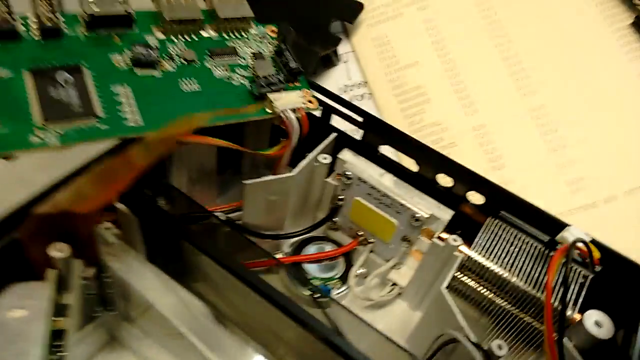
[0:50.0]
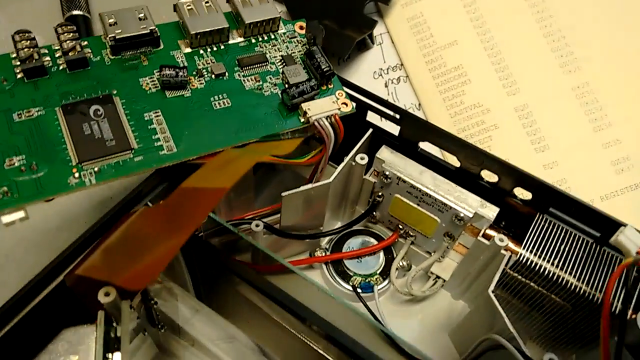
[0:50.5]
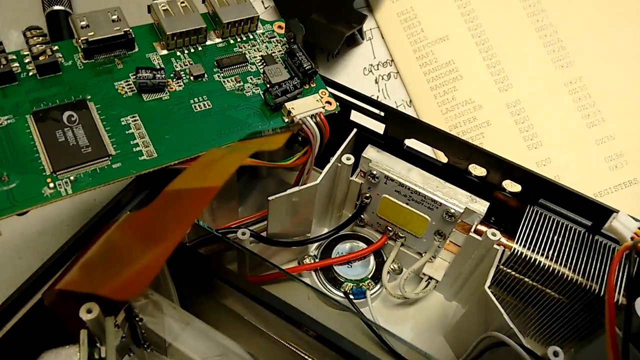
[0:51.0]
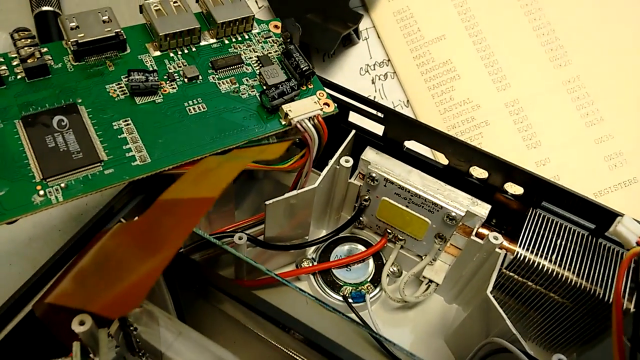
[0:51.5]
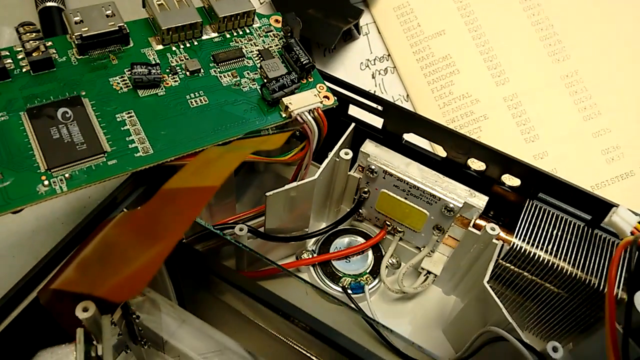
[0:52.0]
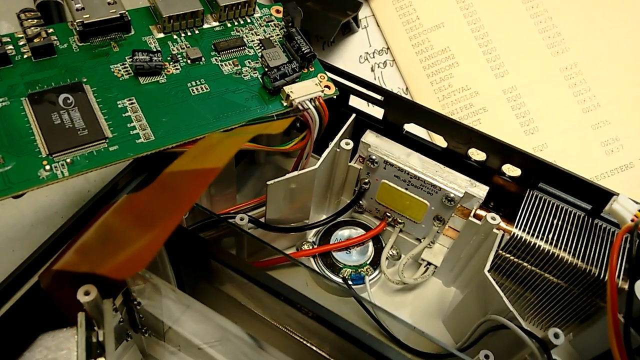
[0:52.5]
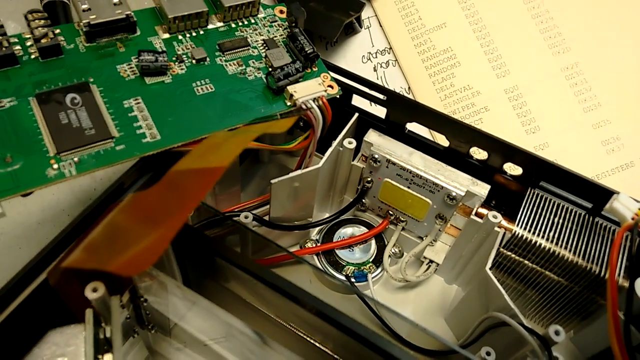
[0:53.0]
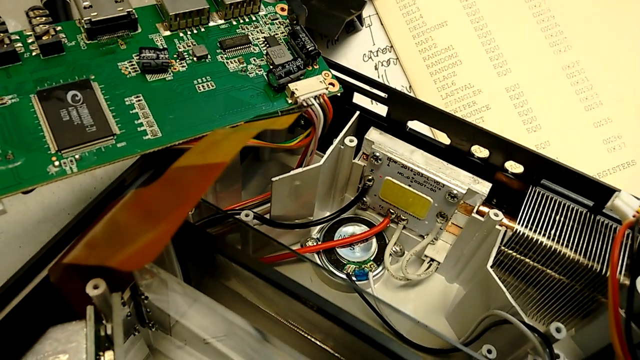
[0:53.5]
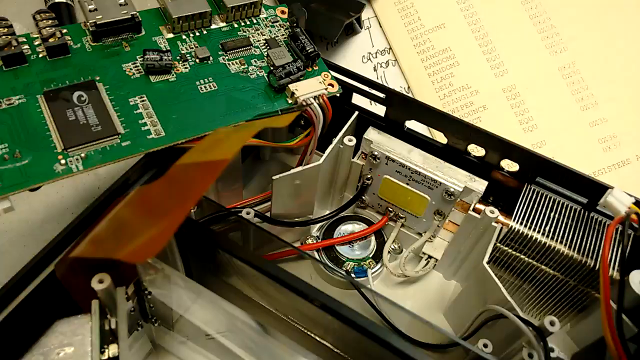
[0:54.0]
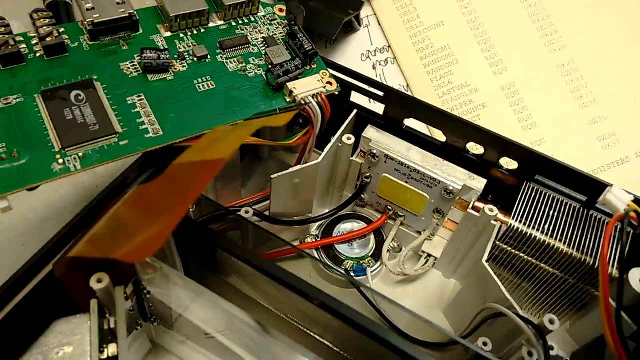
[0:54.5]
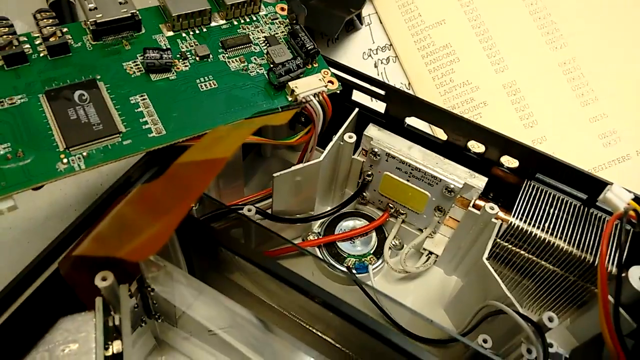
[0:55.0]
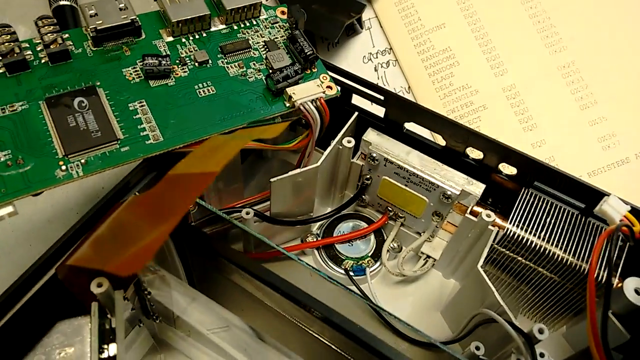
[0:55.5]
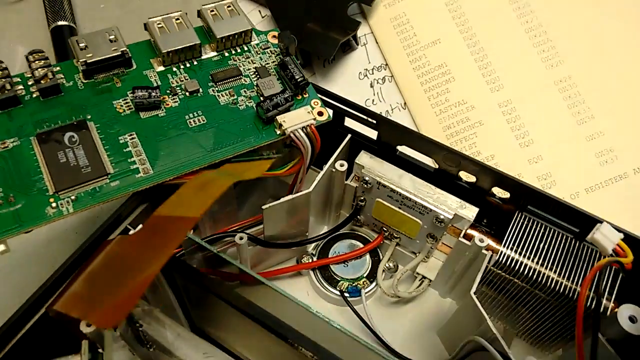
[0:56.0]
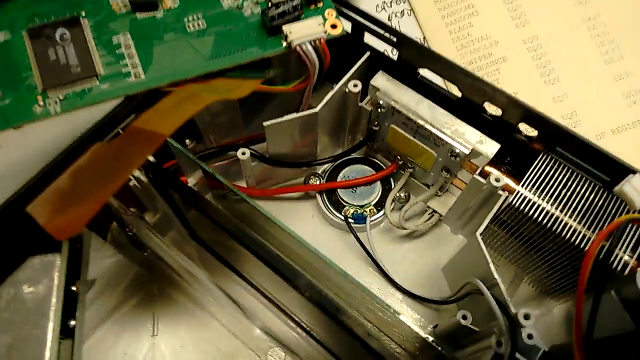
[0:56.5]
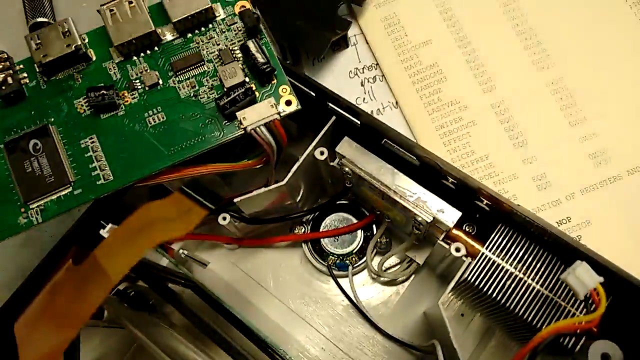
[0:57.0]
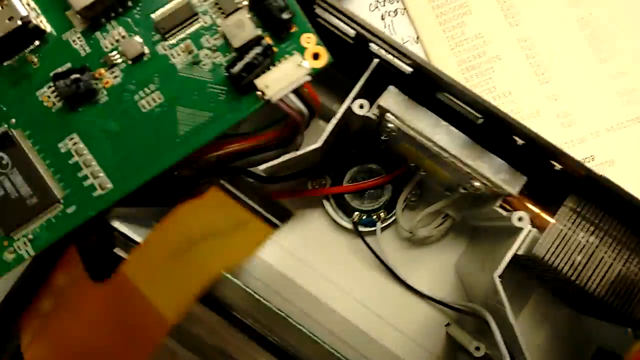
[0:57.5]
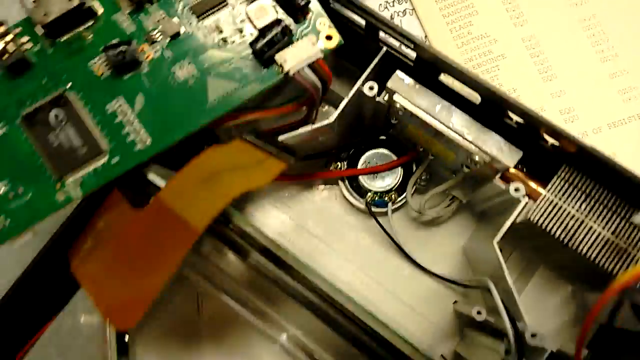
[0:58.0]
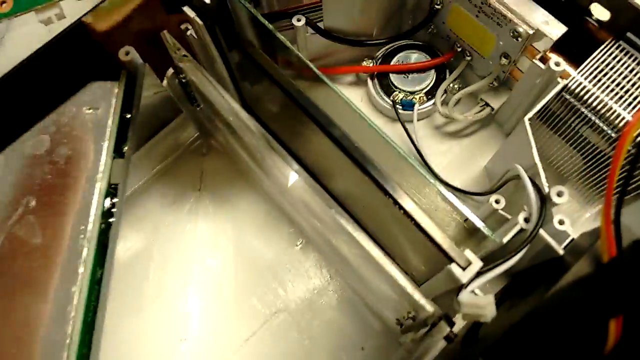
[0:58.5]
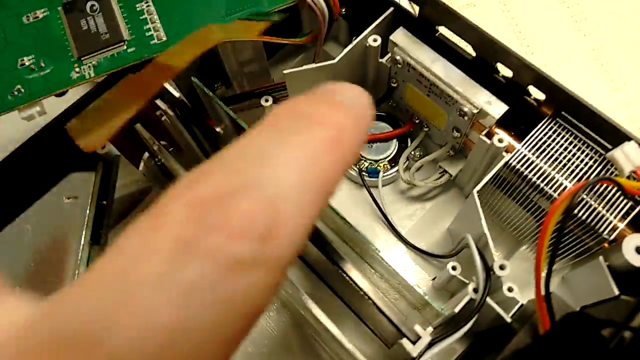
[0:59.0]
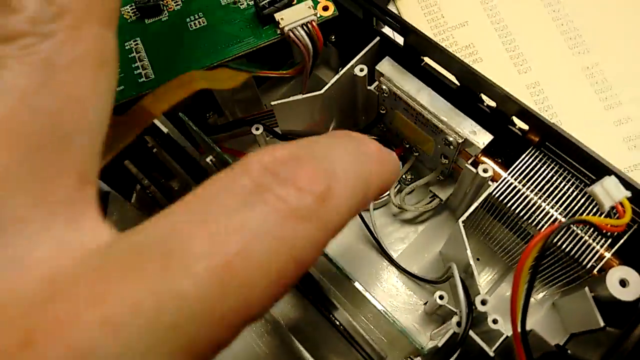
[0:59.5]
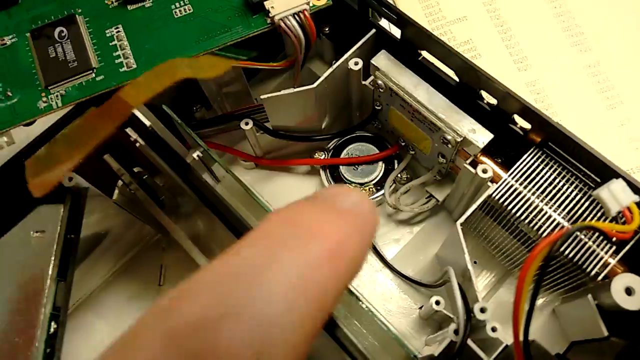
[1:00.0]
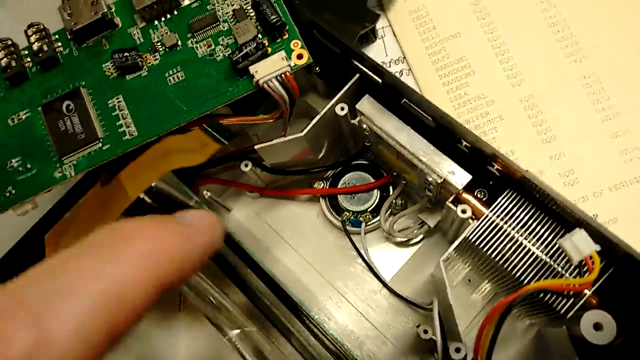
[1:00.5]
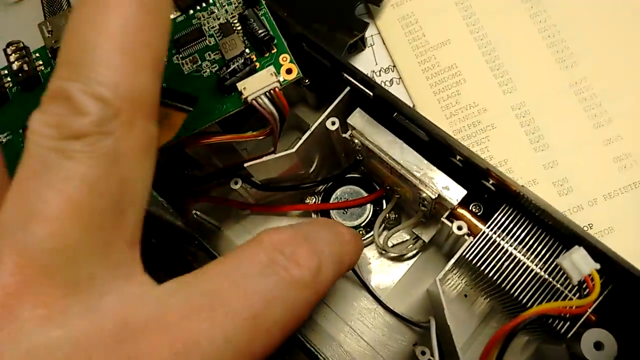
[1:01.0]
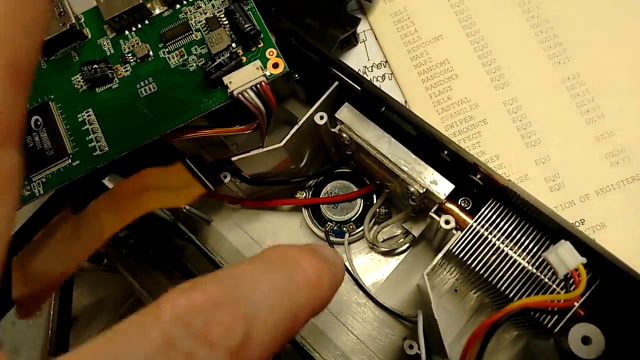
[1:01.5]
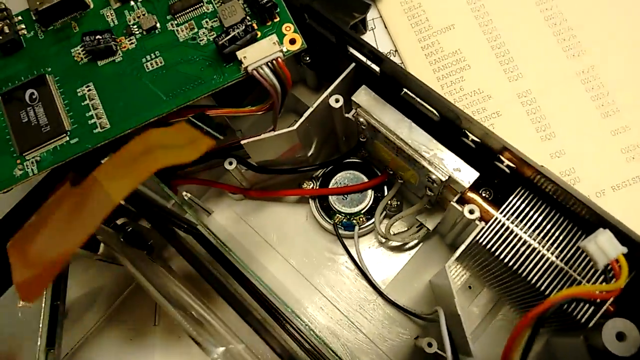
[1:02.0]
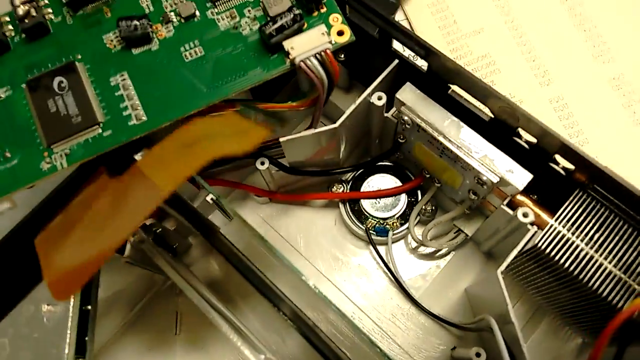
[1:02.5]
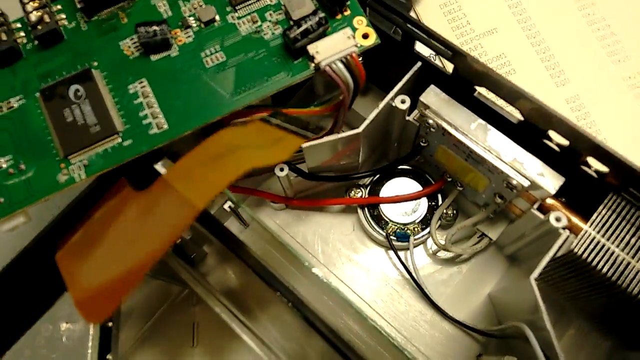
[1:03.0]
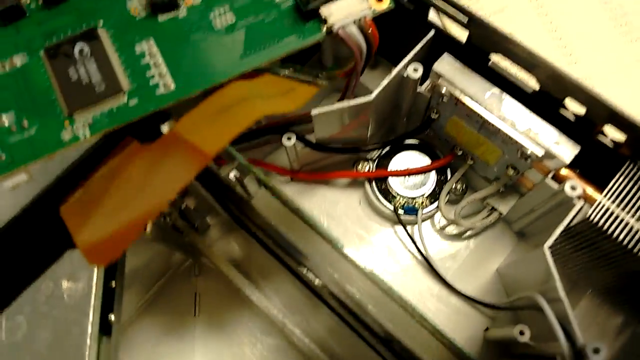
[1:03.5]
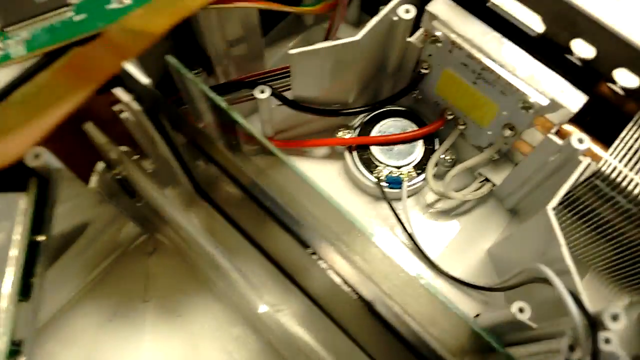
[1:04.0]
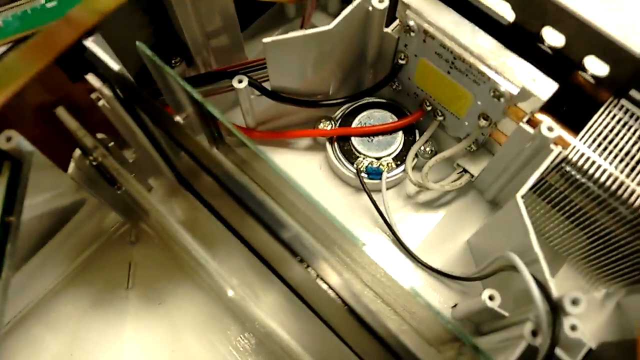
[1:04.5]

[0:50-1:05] A white Caucasian male hand points out aspects of the filming device, now showing only the part of the machine on the right-hand side. The shot is panned and zoomed in on this one component to the right with red and black wires, and no other parts are shown.